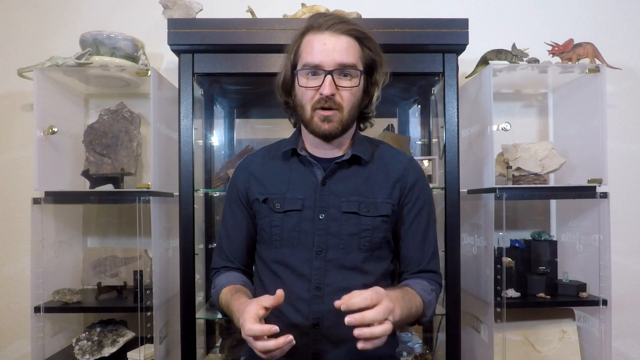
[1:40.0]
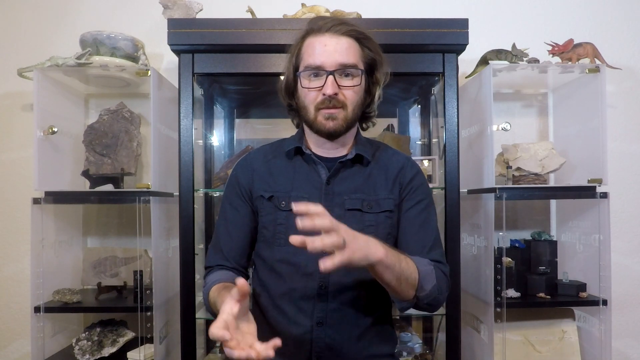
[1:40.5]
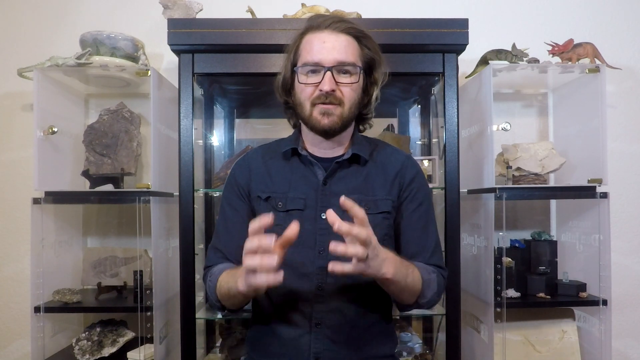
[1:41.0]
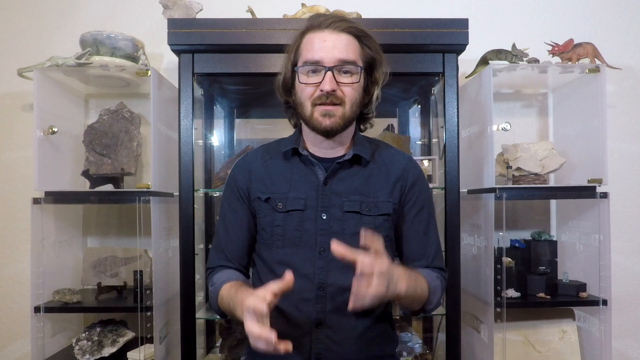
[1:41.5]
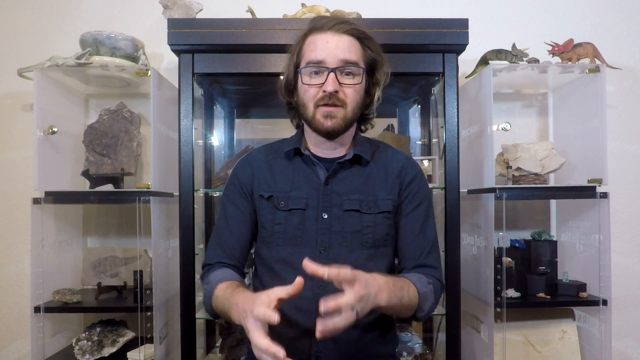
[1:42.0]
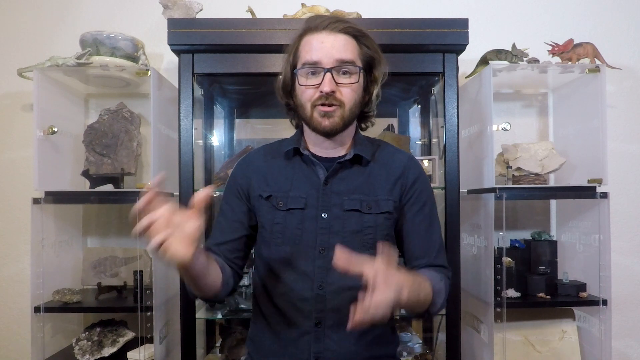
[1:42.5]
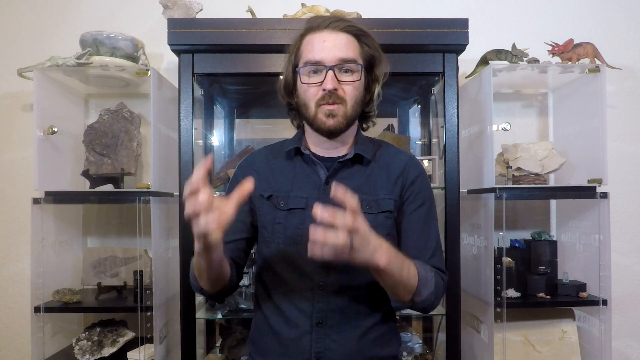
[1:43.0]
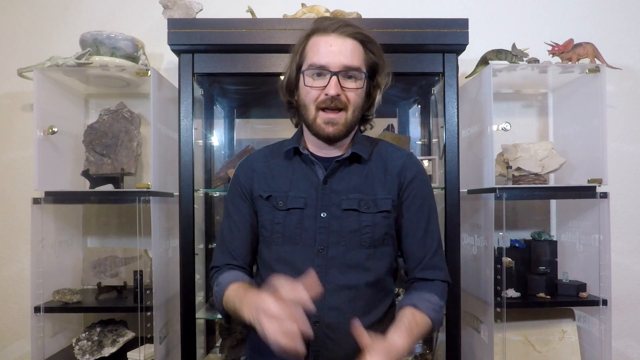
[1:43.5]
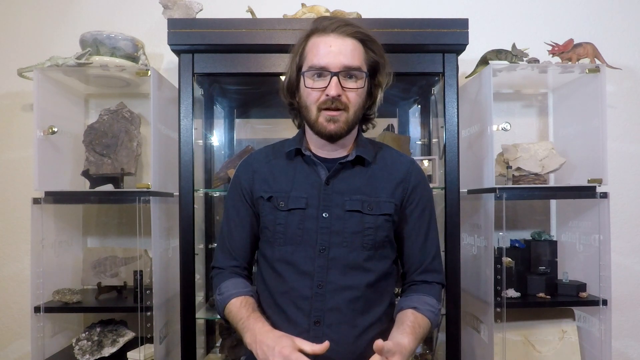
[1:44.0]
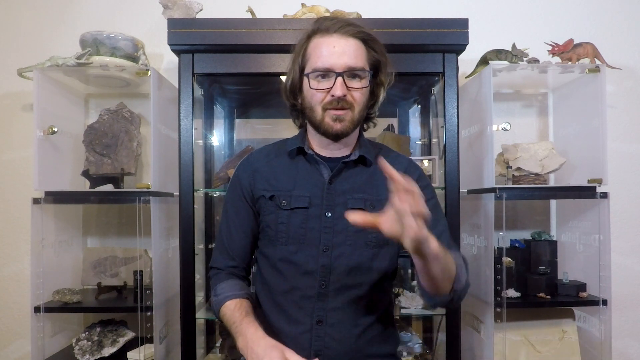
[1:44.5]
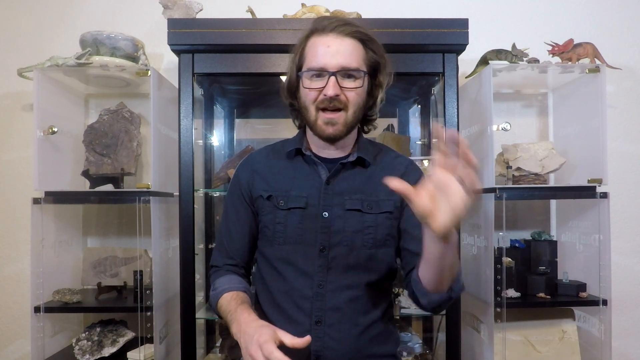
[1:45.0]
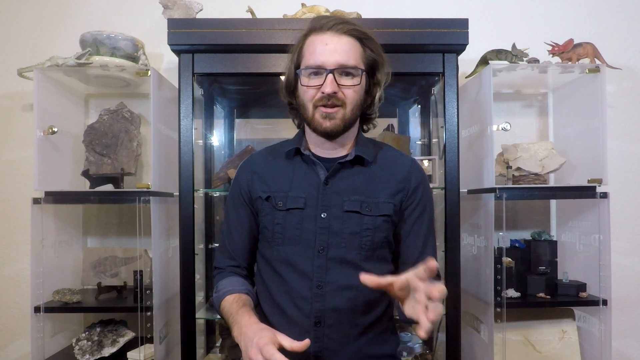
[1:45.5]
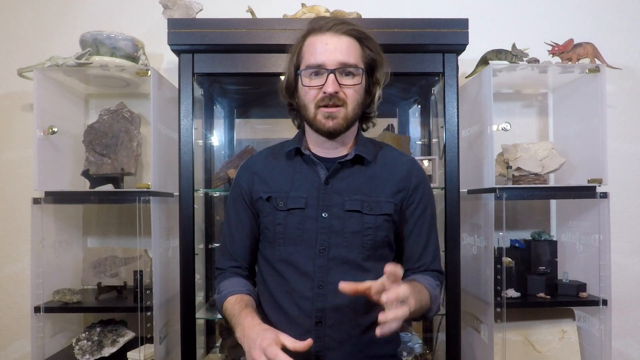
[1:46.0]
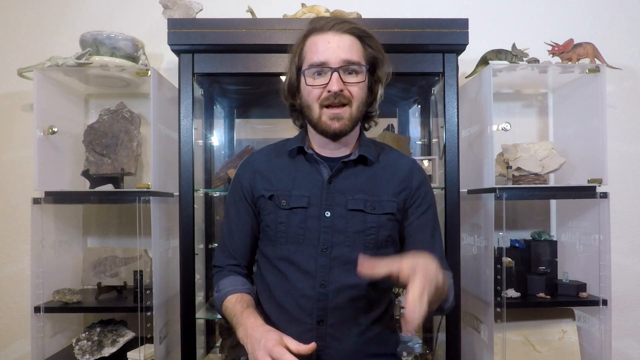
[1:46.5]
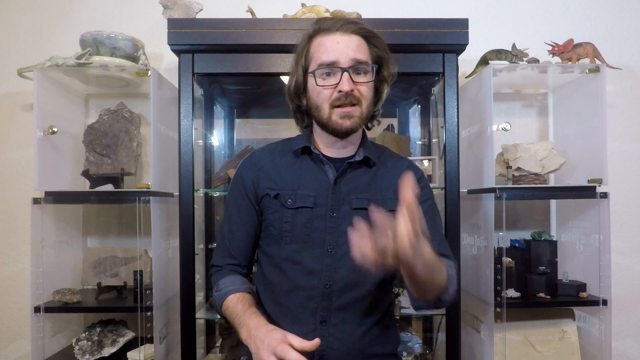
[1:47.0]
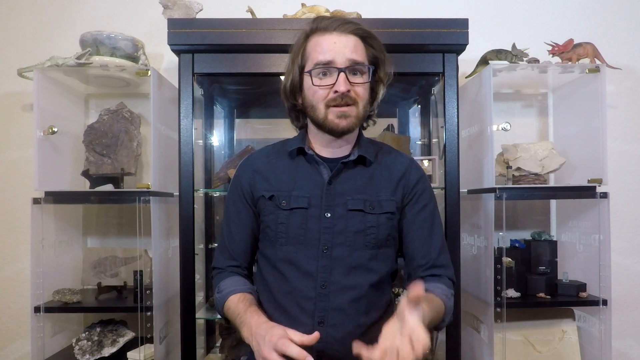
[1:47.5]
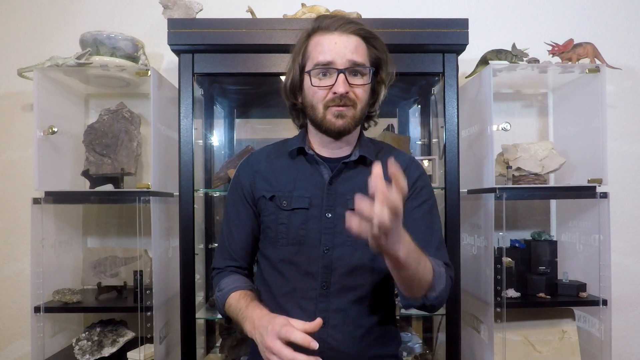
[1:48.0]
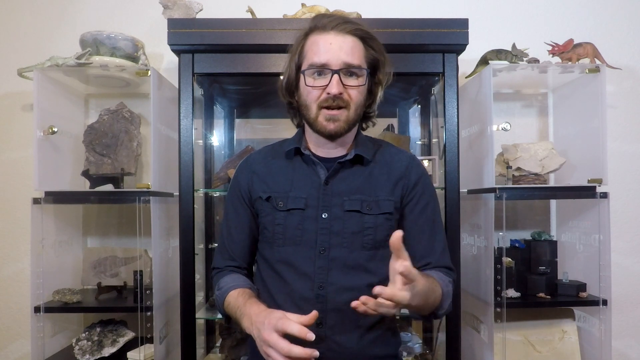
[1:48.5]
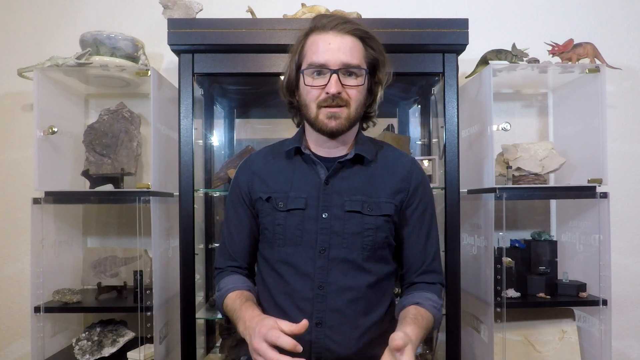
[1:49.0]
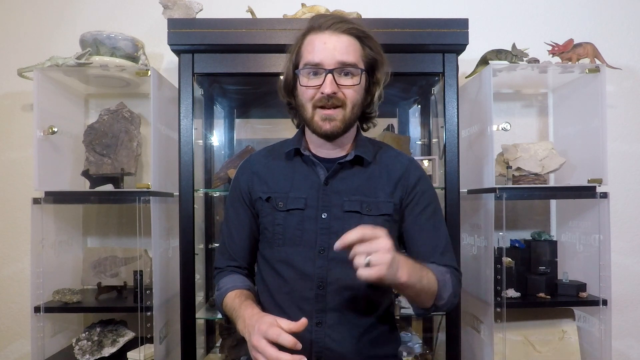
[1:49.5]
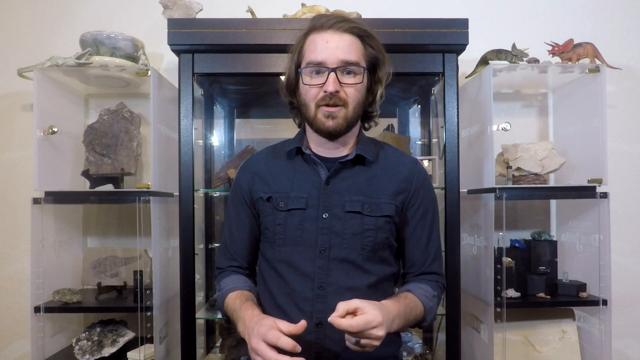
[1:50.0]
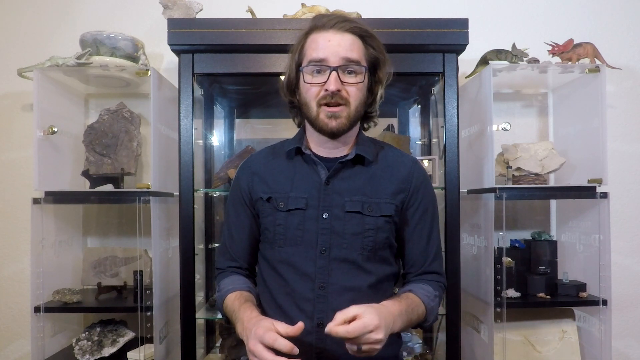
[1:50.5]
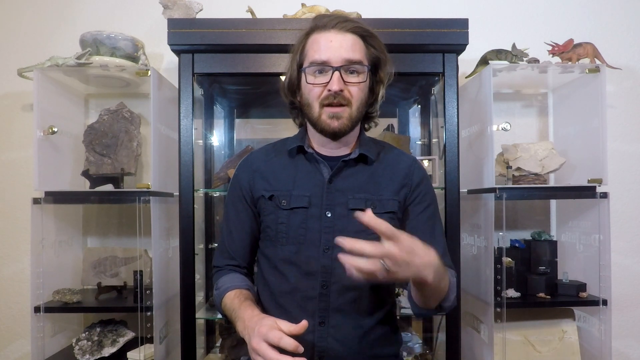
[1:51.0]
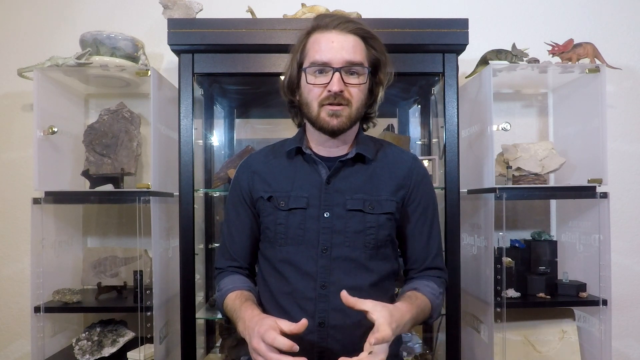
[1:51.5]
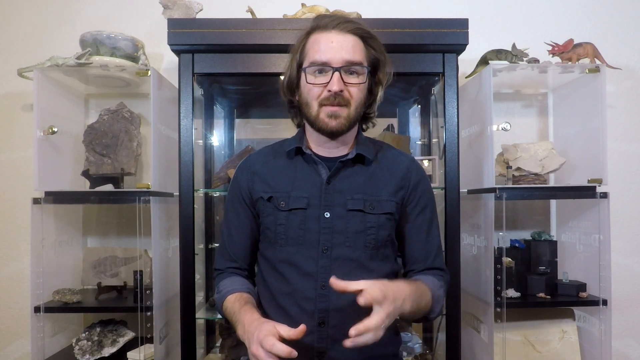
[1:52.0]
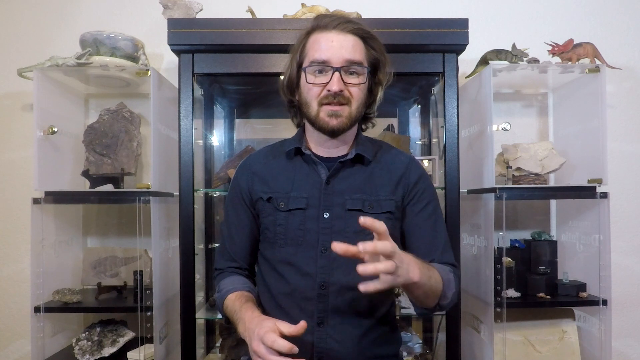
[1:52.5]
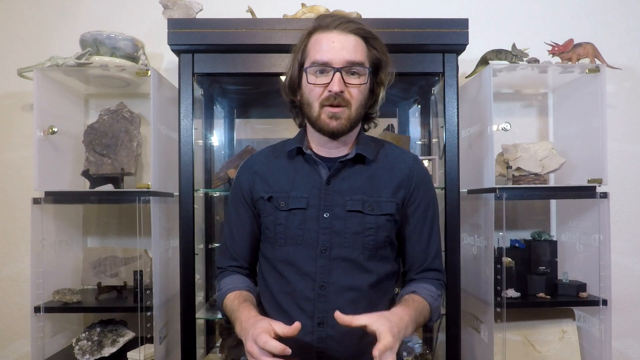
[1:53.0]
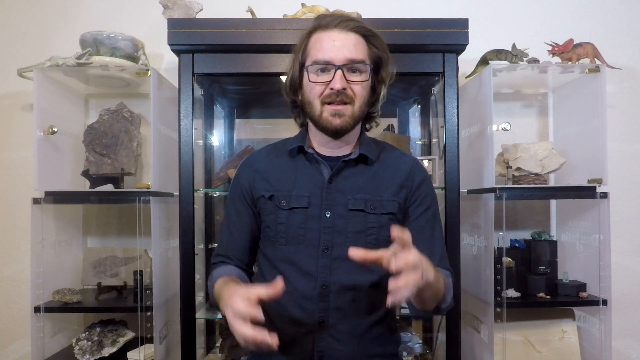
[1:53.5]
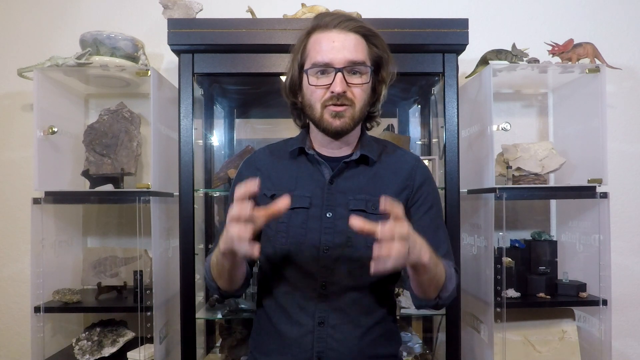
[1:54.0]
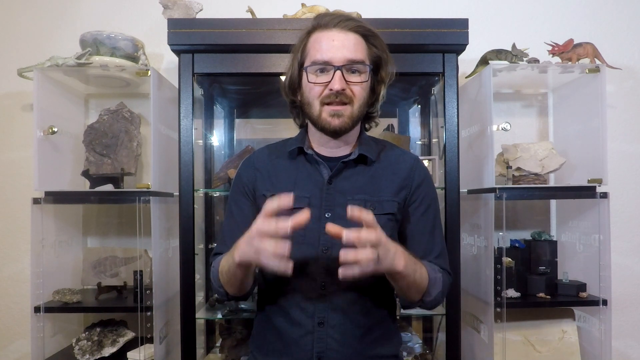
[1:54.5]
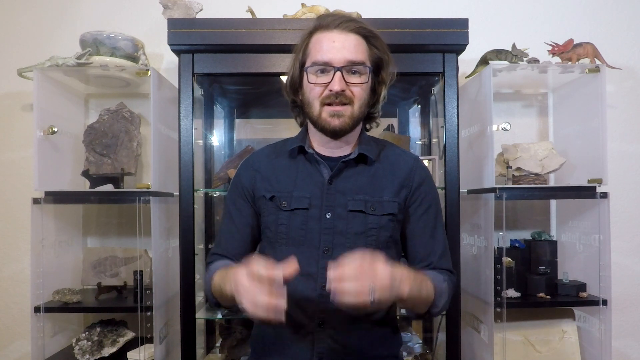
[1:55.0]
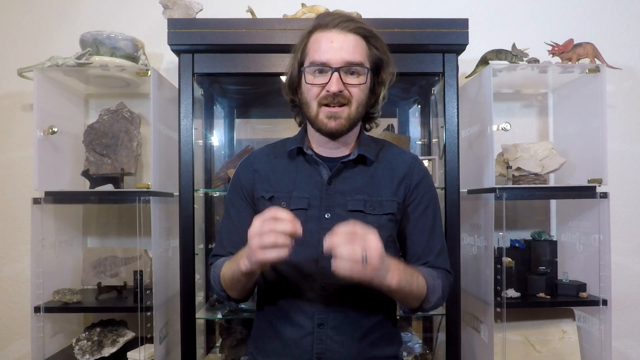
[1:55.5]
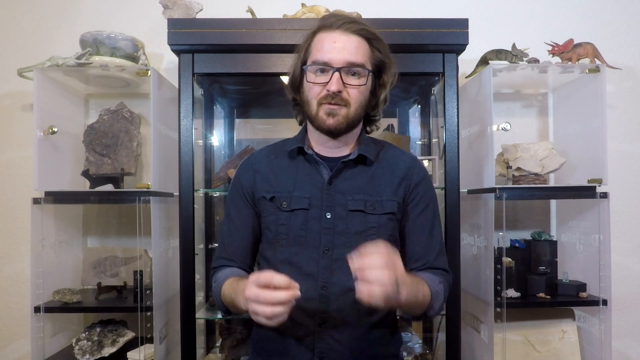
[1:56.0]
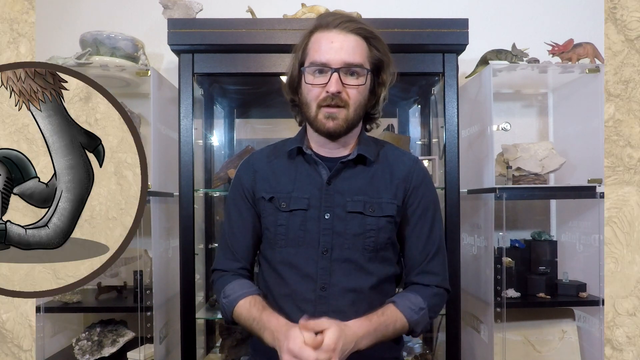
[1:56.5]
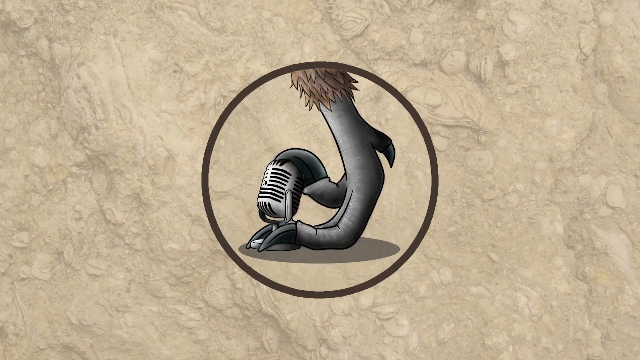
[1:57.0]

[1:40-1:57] The host and the background remain the same. Behind him is an ebony cabinet in the middle with a display case on each side; what is inside the cabinet is not visible because the host blocks the view. The two smaller display cases contain fossilized rocks, apparently including some plant life and small reptiles. On top of the display cases are Triceratops toys; on the right case, two Triceratops toys face each other. On the left case there appears to be a mineral shaped into a bowl, with two crocodile-like dinosaurs next to it. There is also a collection of rocks on black stands. The host continues talking toward the end of the video. The ending credits show the same logo as the opening credits, a stylized microphone between the talons of a bird of prey or raptor.